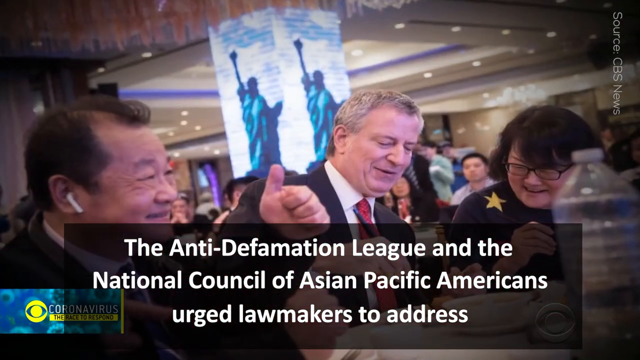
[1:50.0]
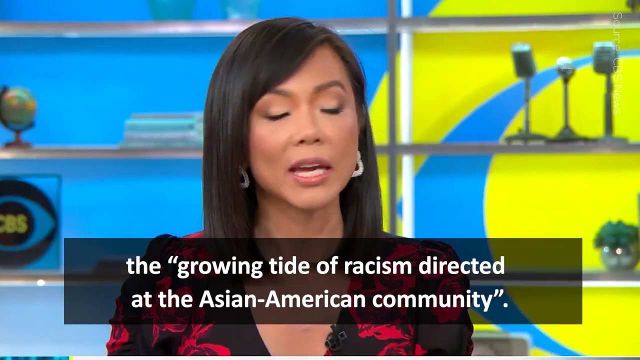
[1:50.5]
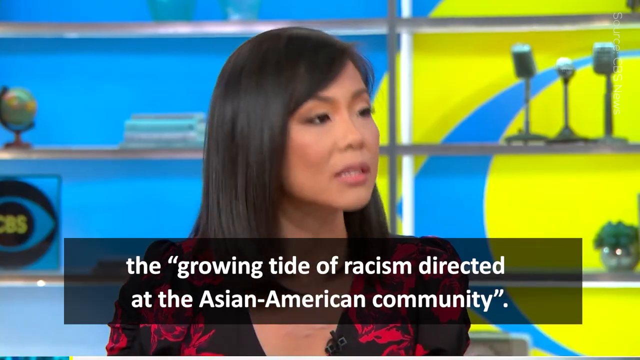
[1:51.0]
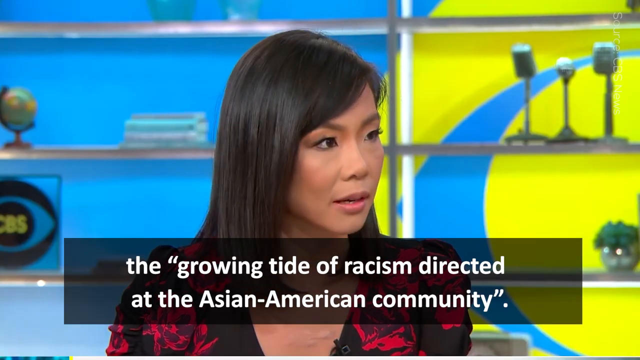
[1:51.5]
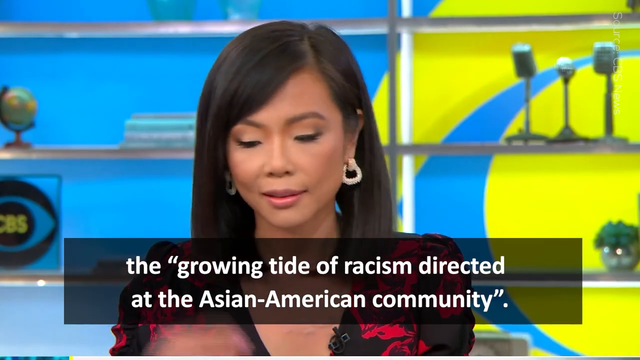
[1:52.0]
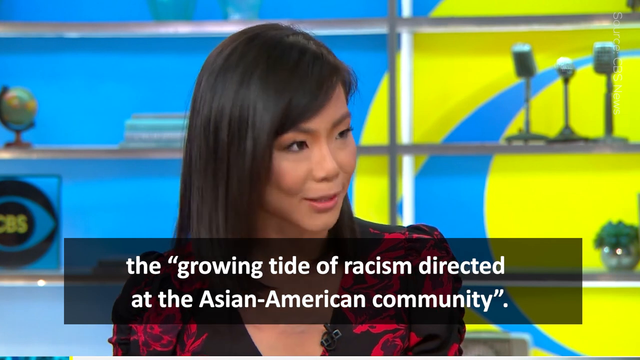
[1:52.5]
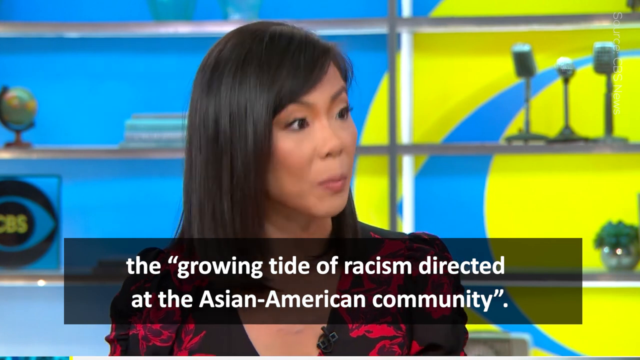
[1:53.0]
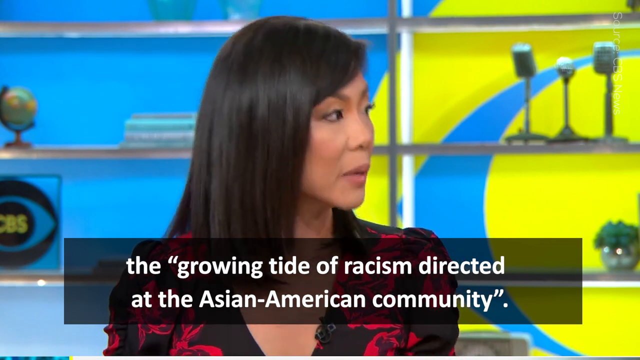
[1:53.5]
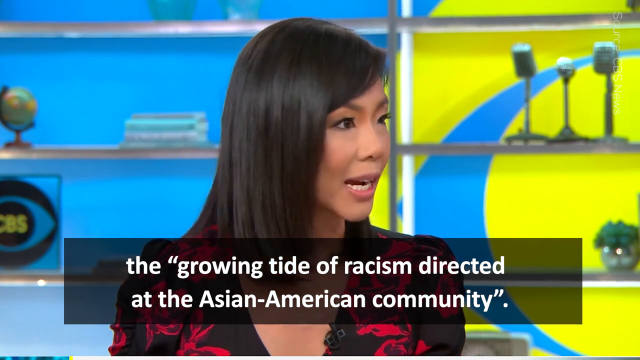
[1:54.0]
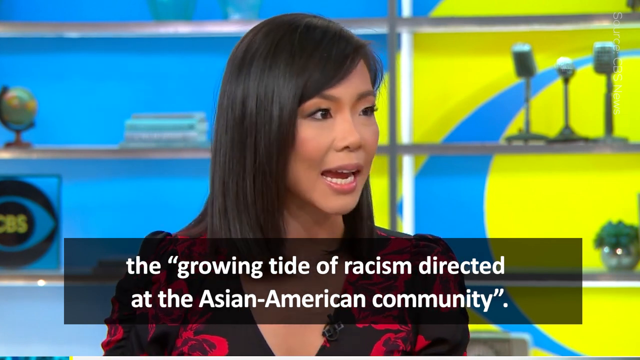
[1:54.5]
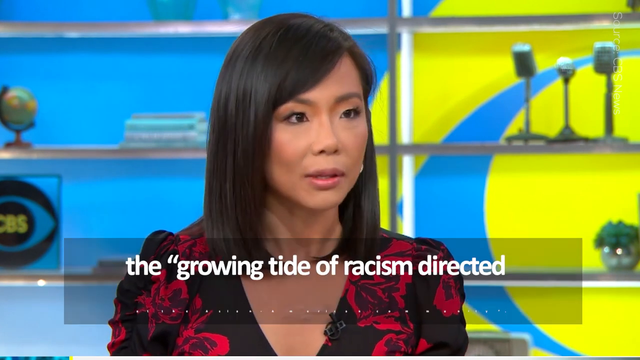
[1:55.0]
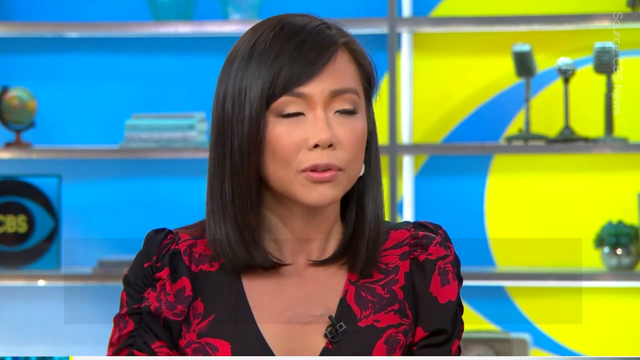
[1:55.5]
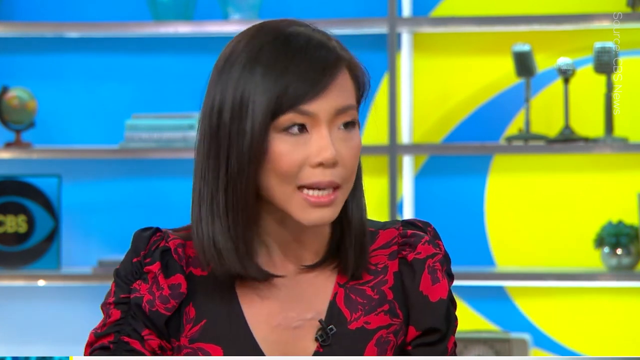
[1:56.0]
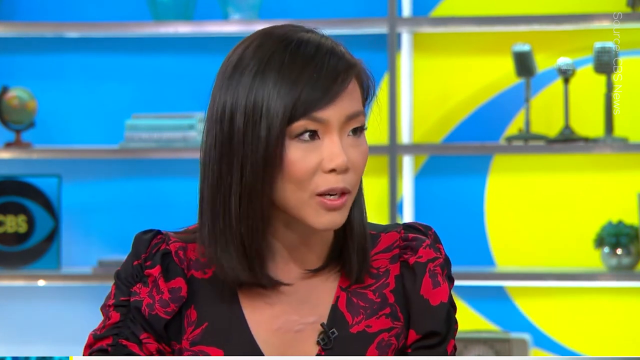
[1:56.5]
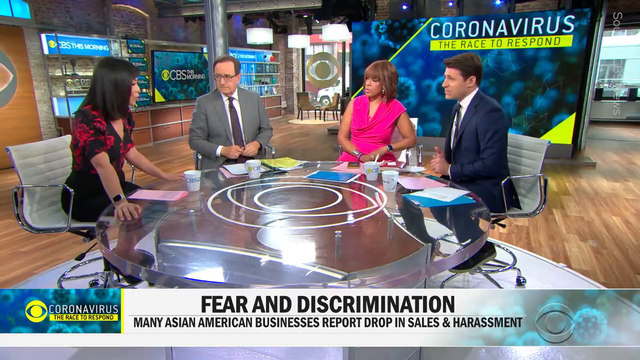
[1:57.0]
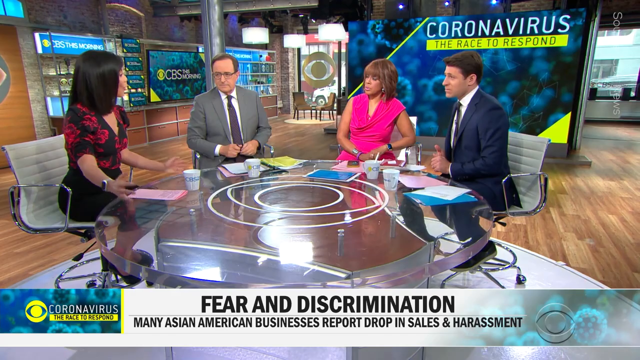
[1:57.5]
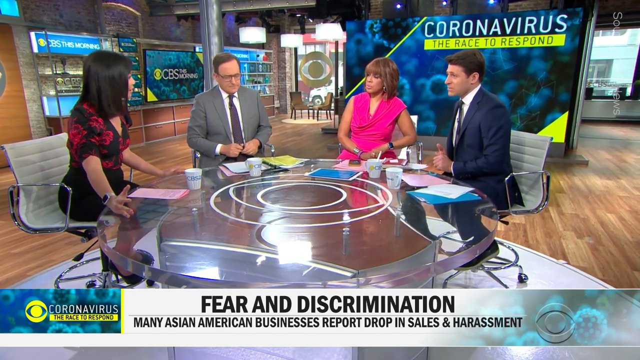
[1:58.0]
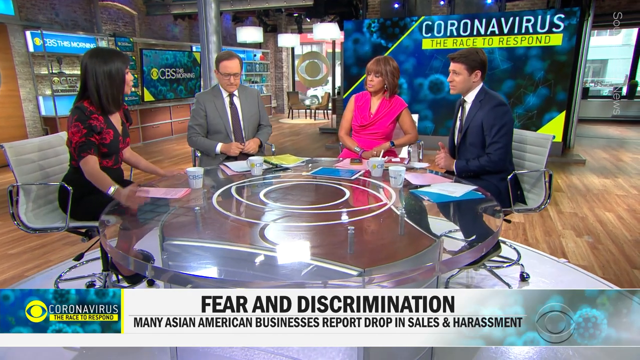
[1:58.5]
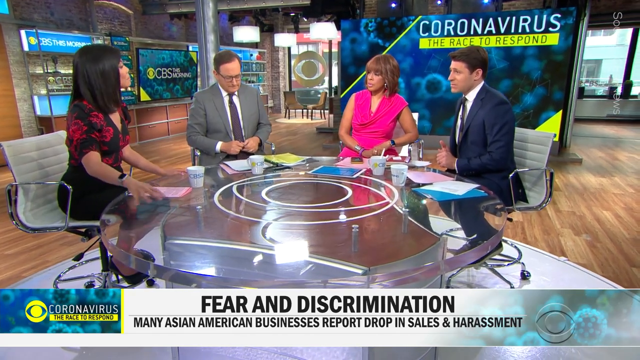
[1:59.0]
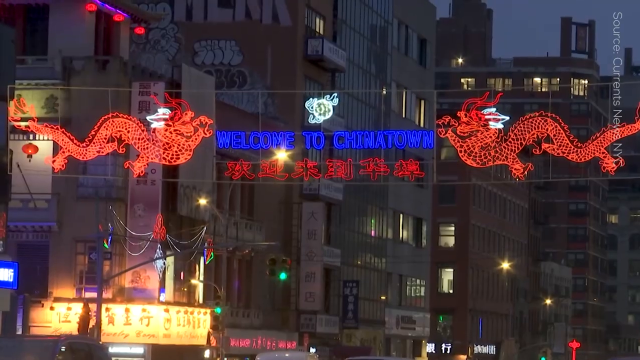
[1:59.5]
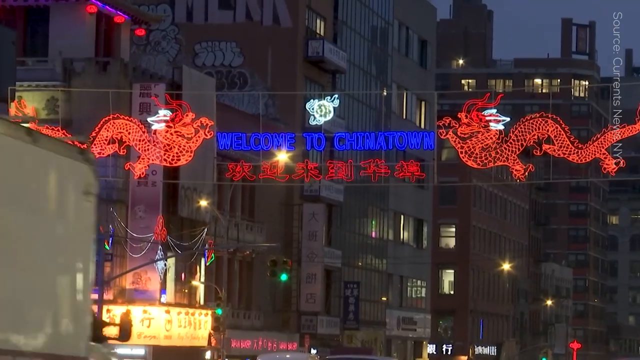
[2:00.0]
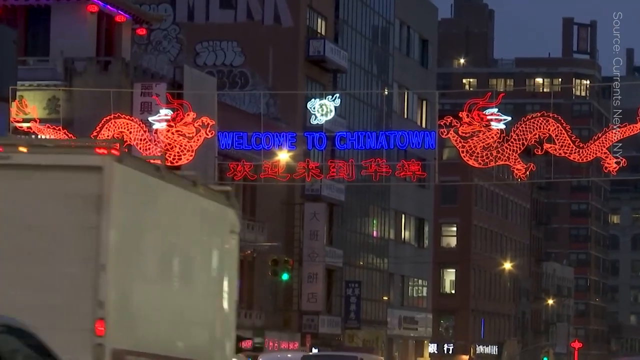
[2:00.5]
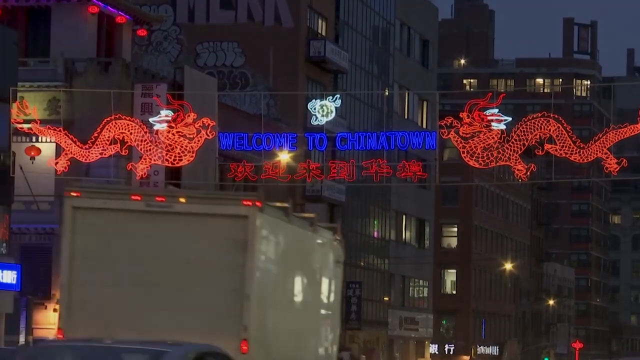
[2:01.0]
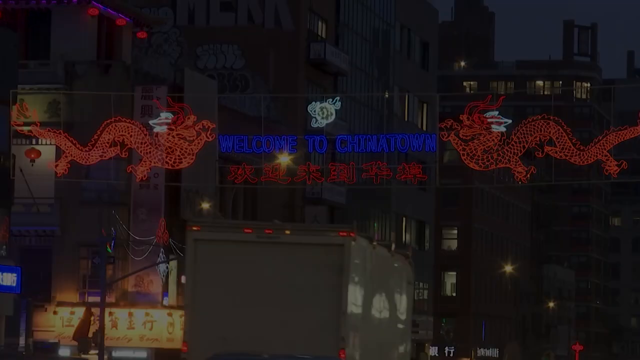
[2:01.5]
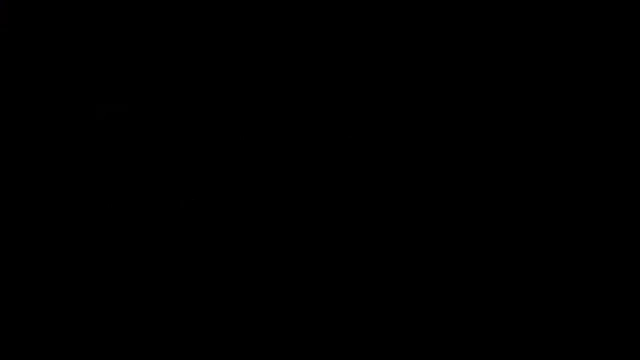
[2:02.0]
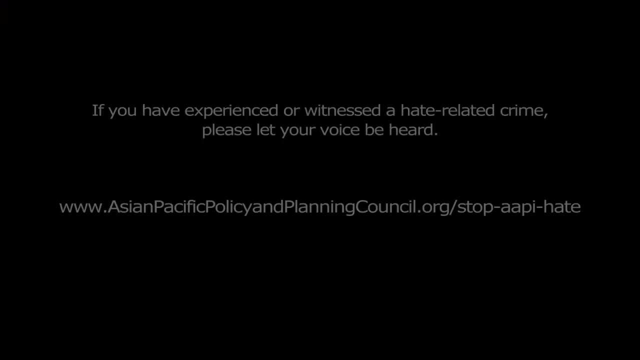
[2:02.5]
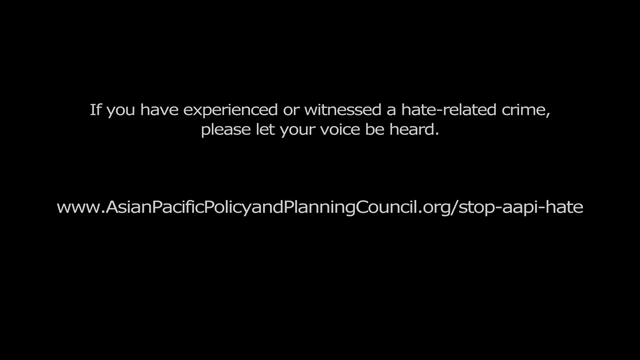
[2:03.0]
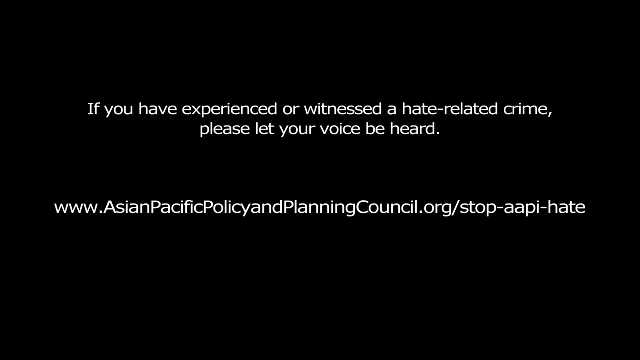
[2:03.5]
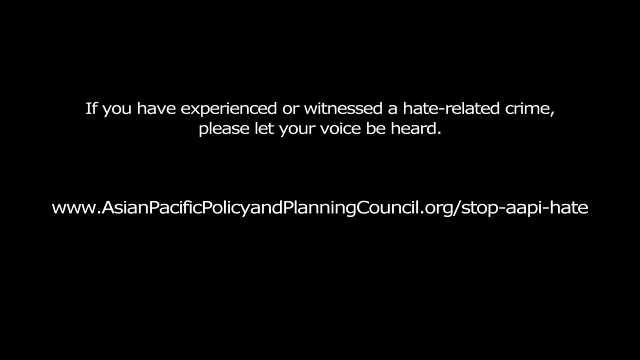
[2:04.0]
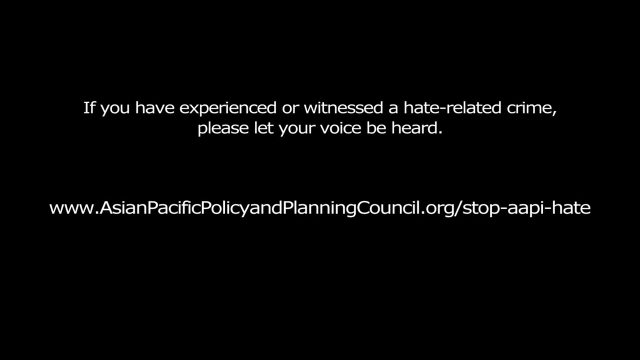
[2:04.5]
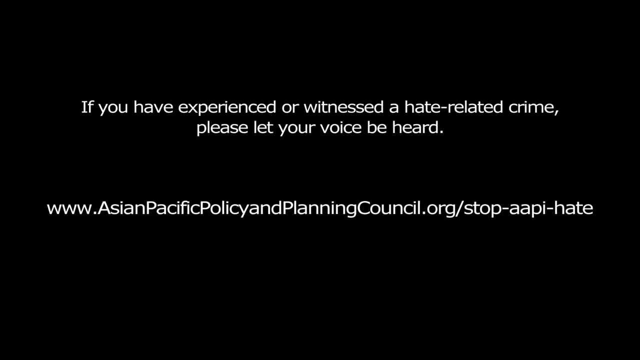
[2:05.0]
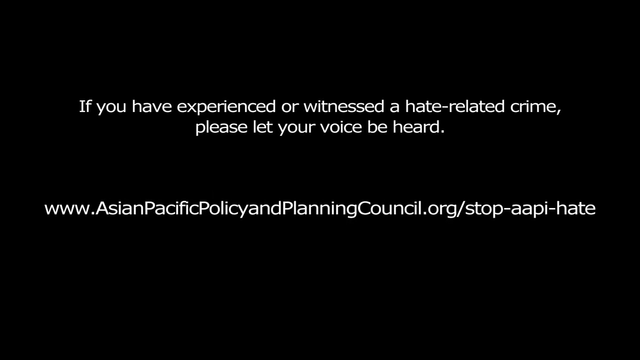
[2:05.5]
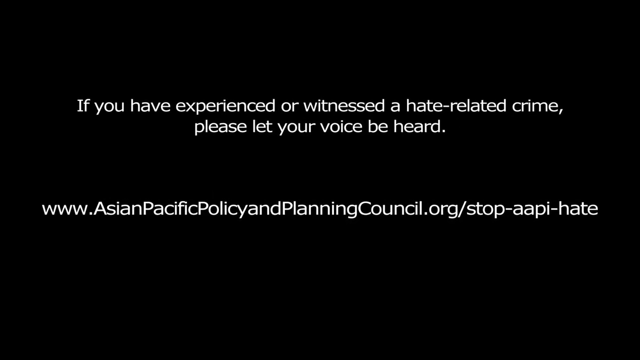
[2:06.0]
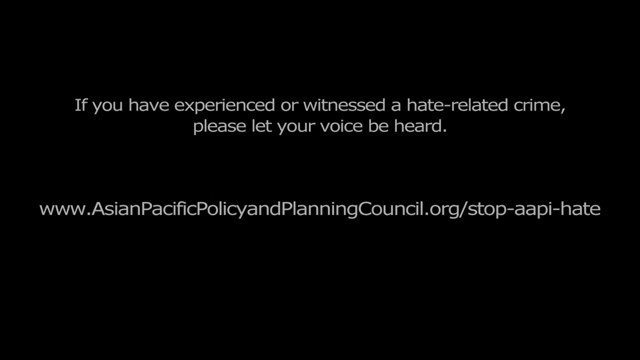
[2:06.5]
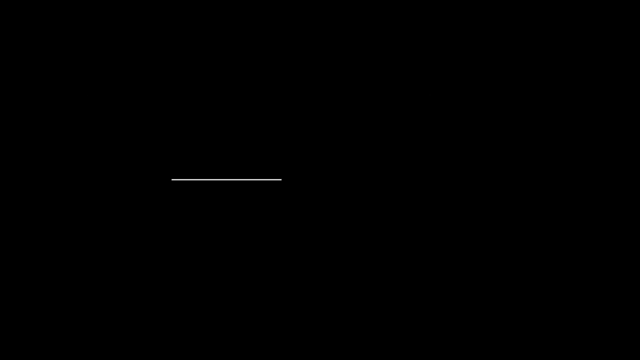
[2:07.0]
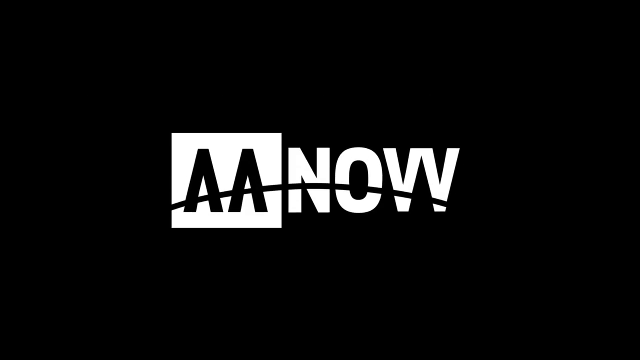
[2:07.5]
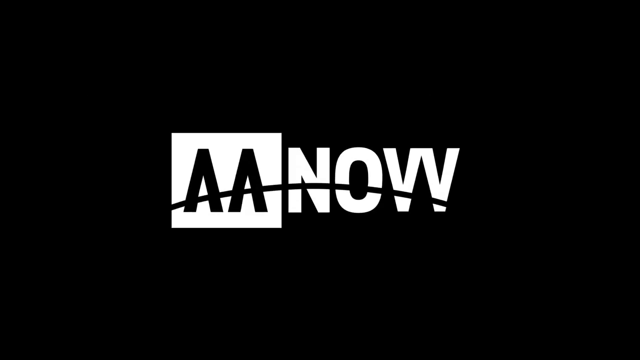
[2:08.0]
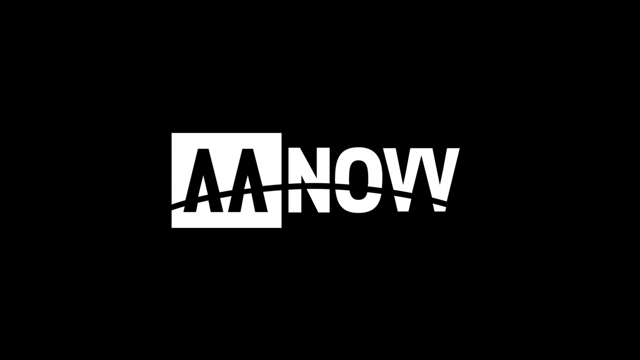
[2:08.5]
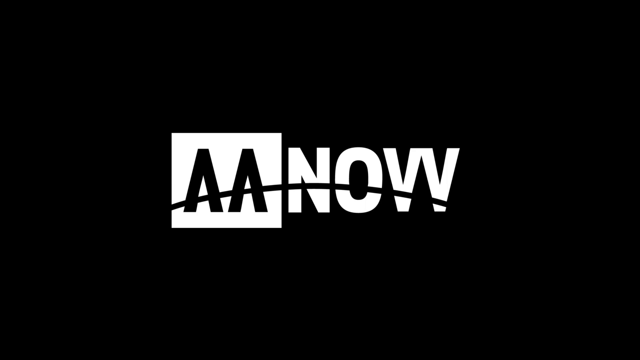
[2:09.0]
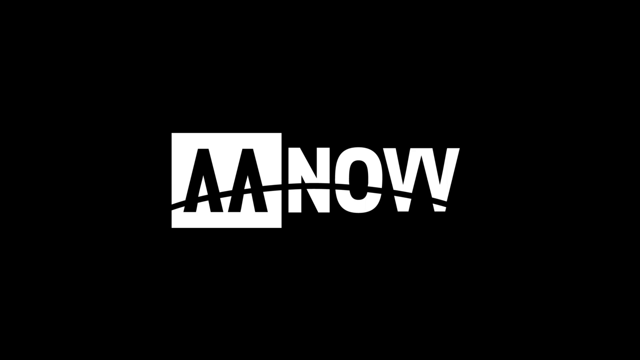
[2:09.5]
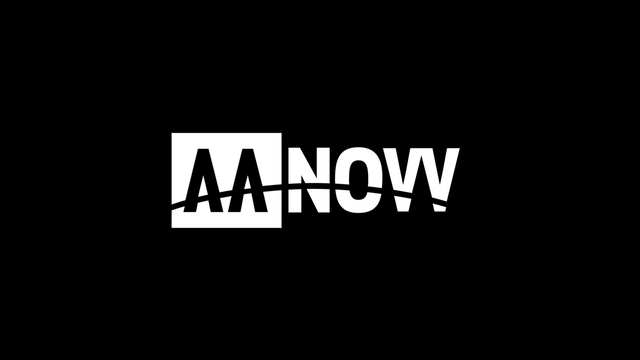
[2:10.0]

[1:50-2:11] Two men appear: one is putting in an earphone and the other is smiling, with a bottle of water nearby. A lady who is a presenter appears, with a small caption at the bottom reading "the growing tide of racism directed at the Asian-American community." She appears with three other people. Red decorated things are shown. The screen flips to a black background with the text "if you have experienced or witnessed a hate-related crime, please let your voice be heard," followed by a website: "www.asianpacificpolicyandplanningcouncil.org-stop-aapi-hate."